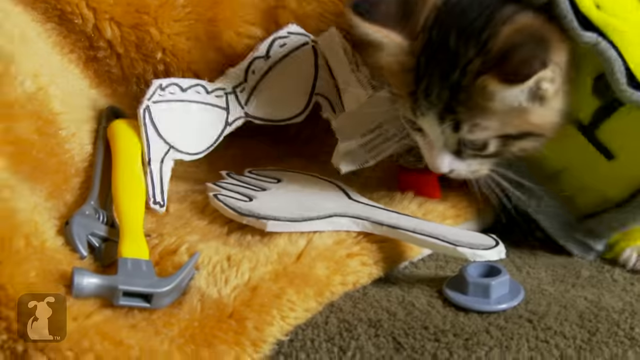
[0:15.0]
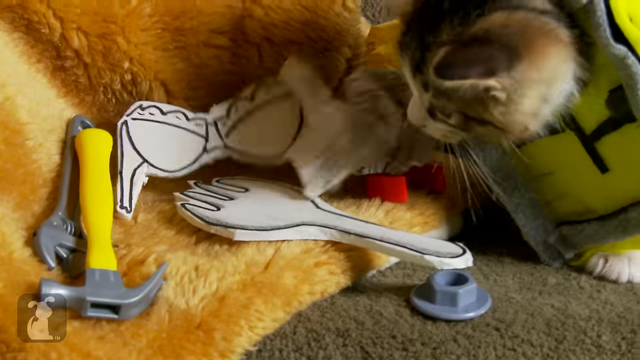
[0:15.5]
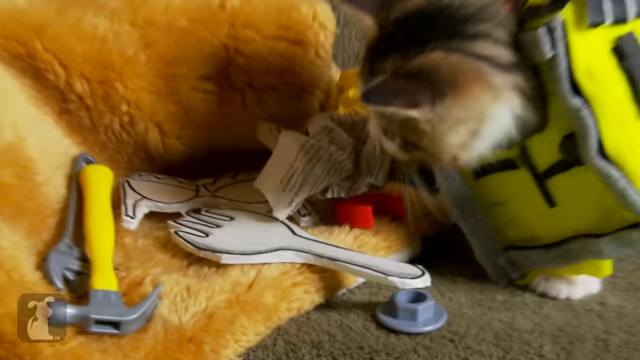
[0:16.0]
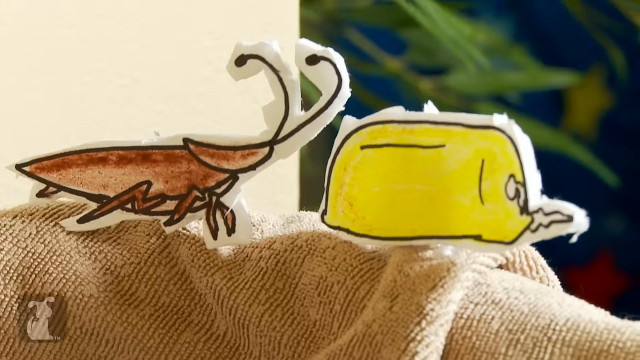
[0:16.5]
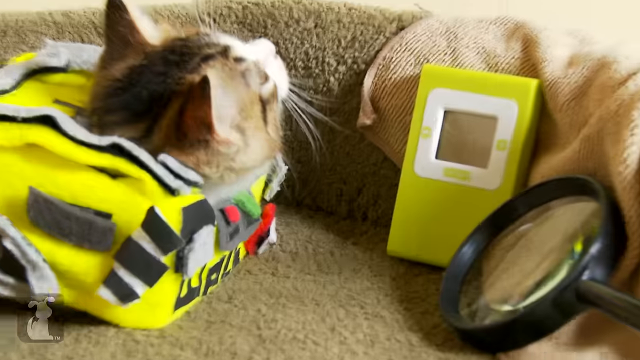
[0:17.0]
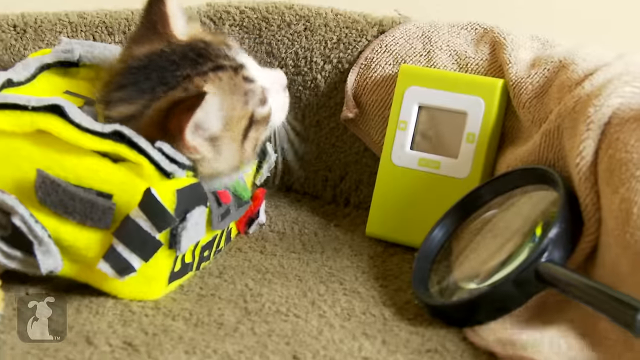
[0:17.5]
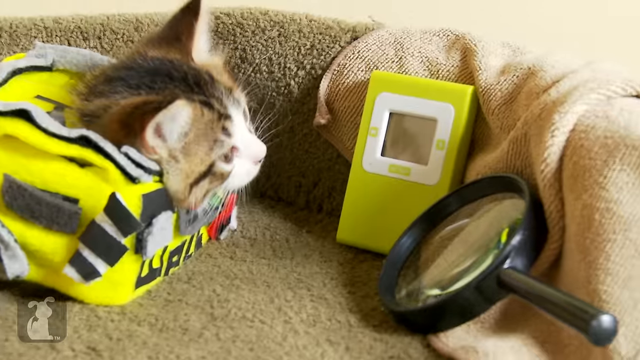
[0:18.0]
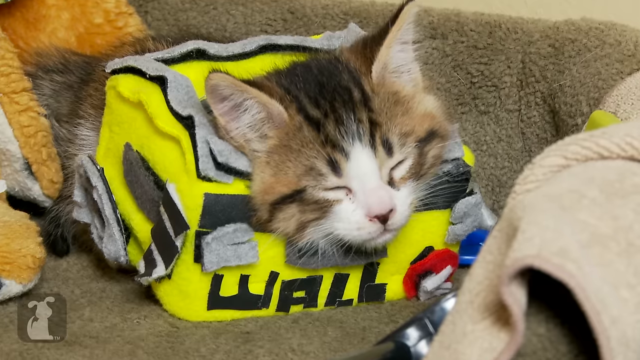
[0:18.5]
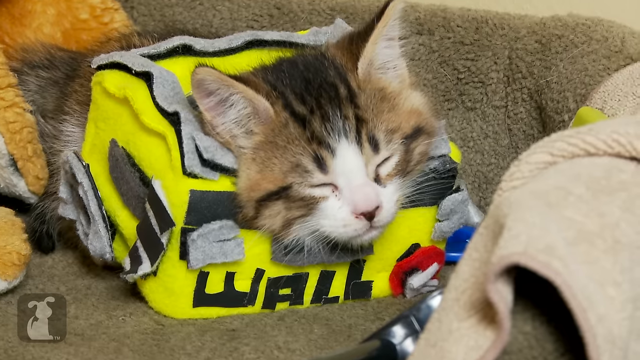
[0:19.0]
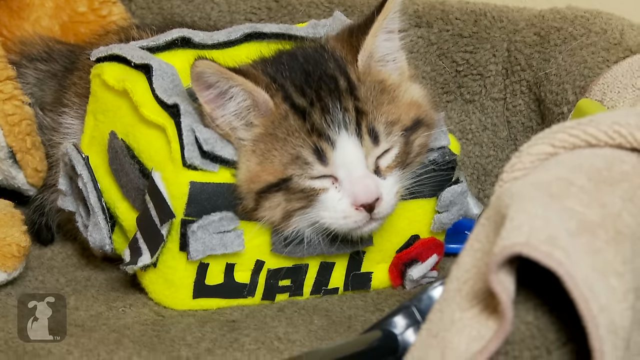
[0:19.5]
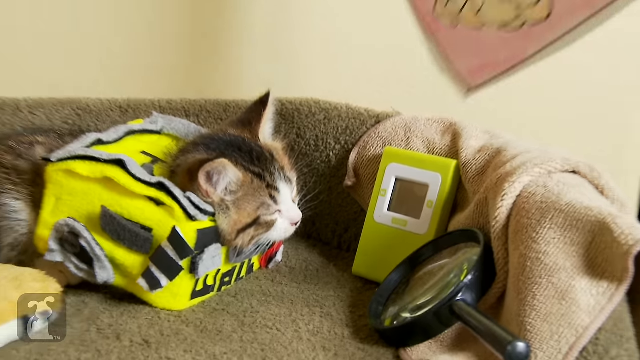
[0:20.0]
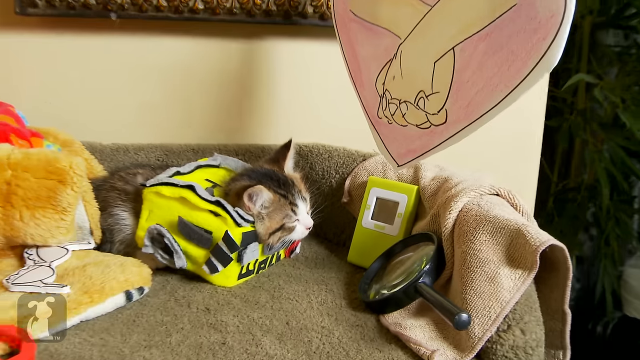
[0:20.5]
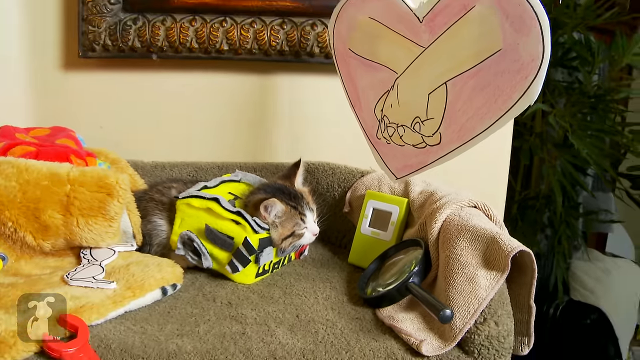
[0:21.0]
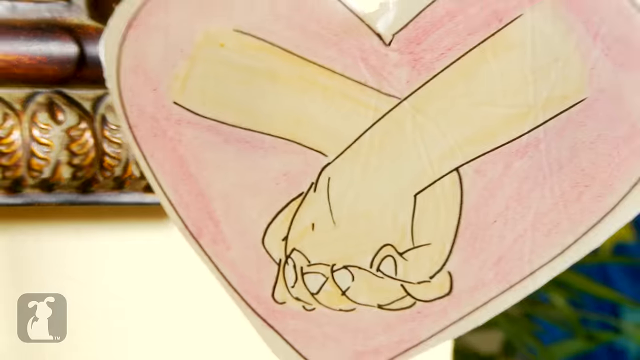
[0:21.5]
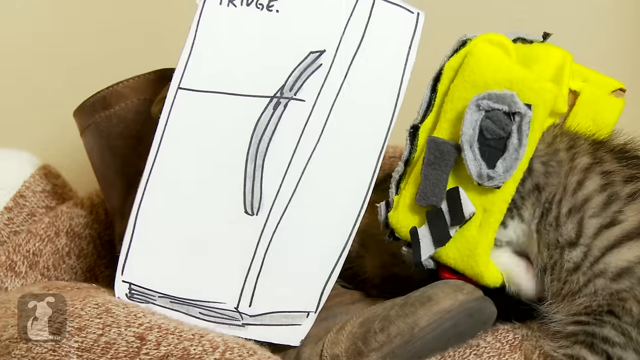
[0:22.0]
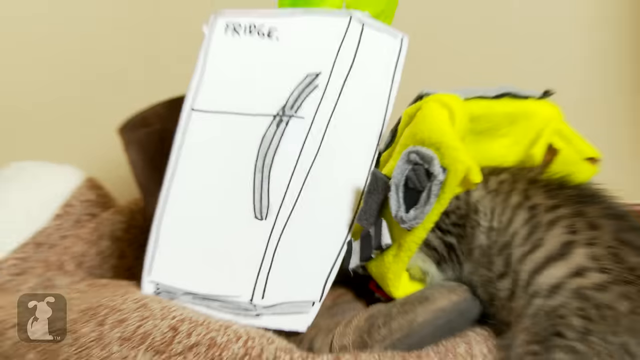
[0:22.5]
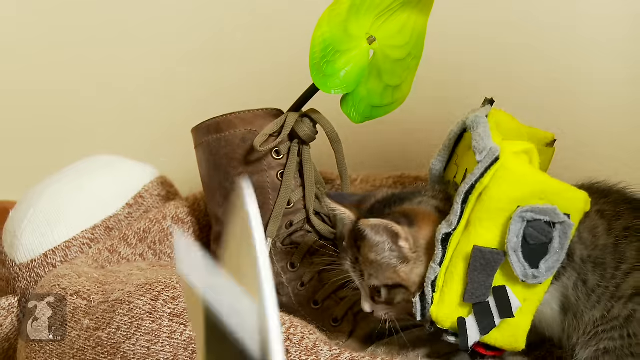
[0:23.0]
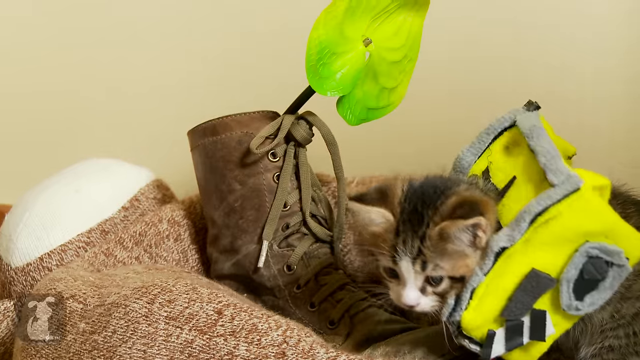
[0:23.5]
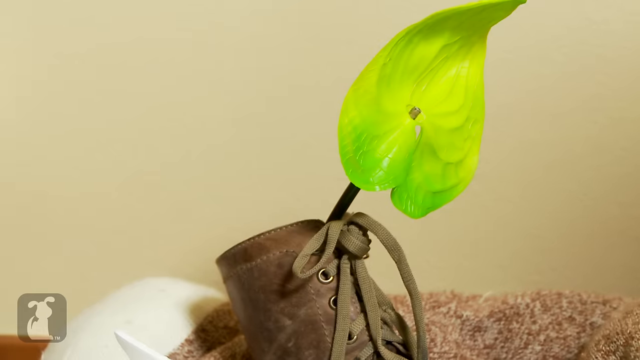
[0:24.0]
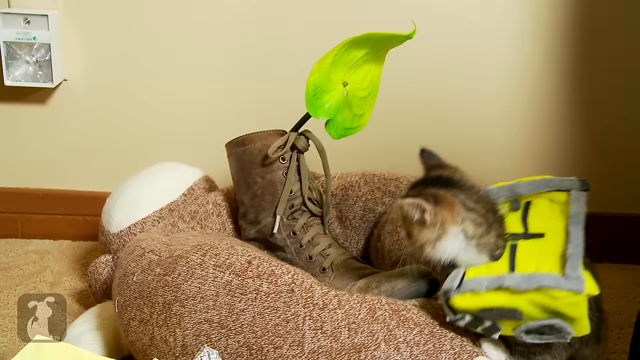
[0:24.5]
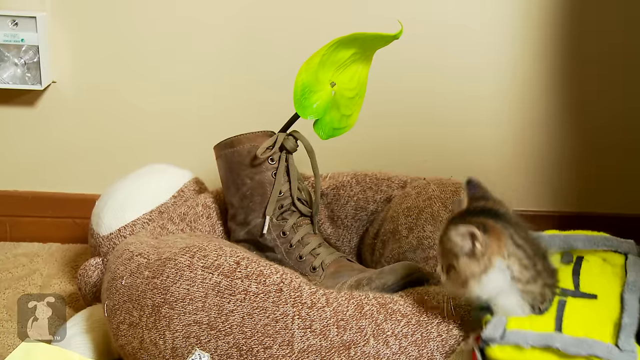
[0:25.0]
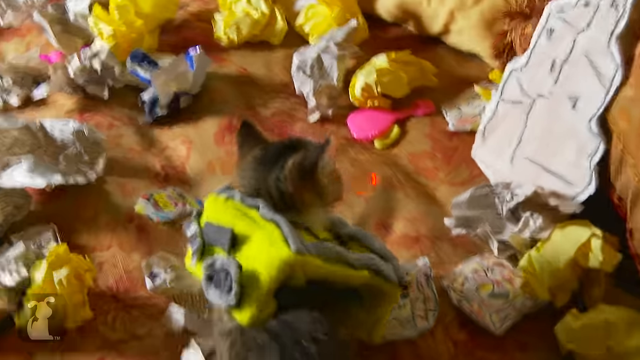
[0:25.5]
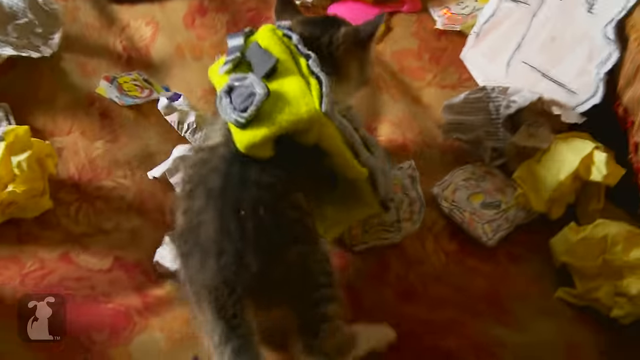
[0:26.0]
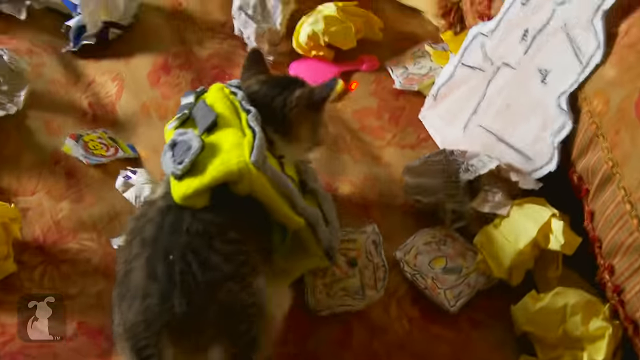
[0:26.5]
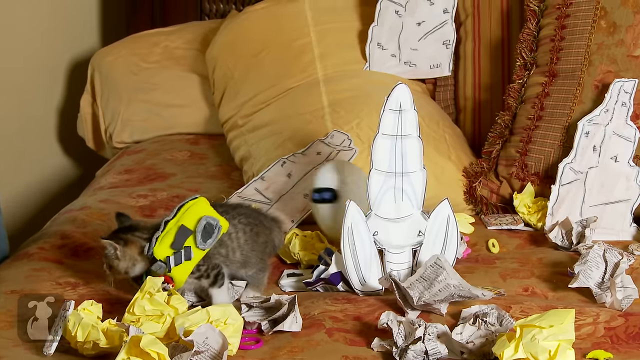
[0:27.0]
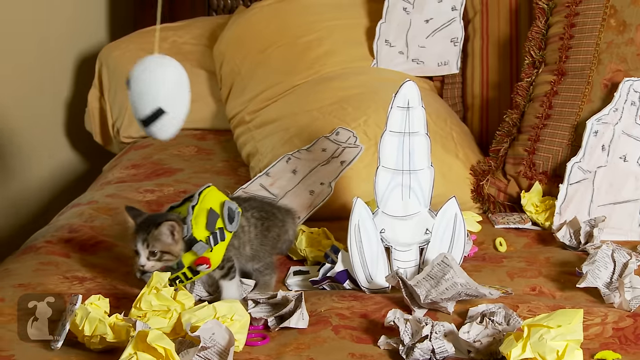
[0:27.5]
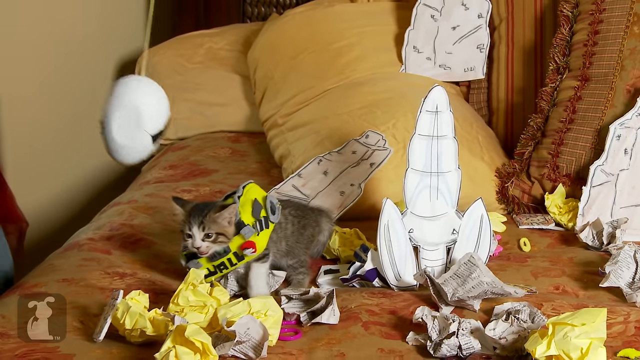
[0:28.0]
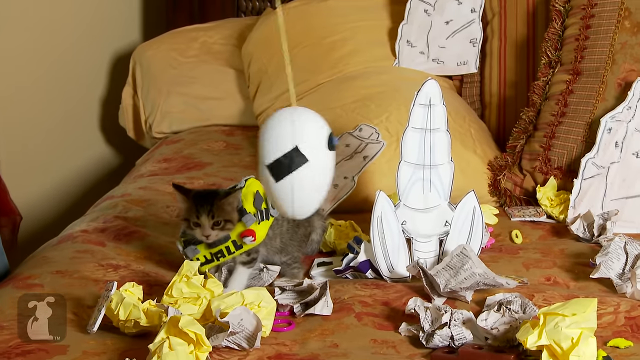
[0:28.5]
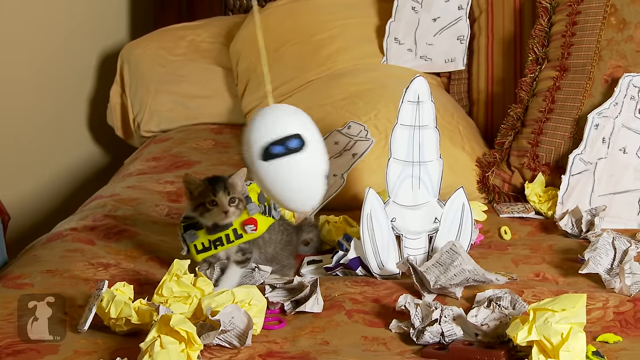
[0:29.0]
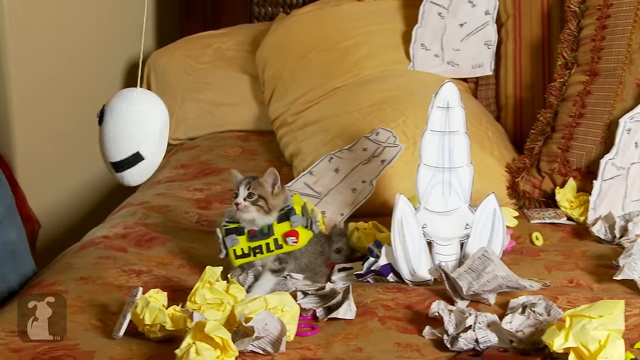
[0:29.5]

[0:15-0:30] The cat walks around, exploring different things around it: something almost like a fork, a roach, a magnifying glass, a refrigerator, and a boot with a leaf coming out of it. Someone swings a laser pointer around and the cat follows it. The video cuts to the cat falling asleep; it is very comfortable in its position and is not bothered by anything around it. Some sort of spherical object is pulled by a string around the cat as if it were flying. For the most part, the scene takes place in a bedroom setting.